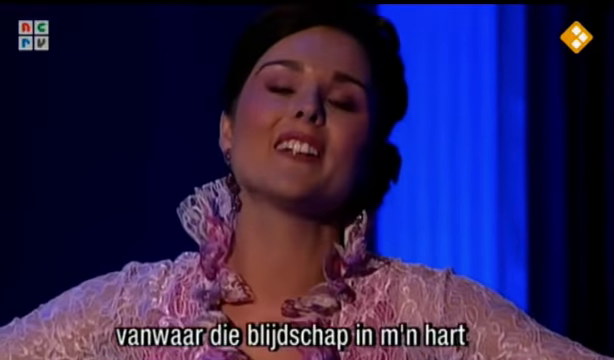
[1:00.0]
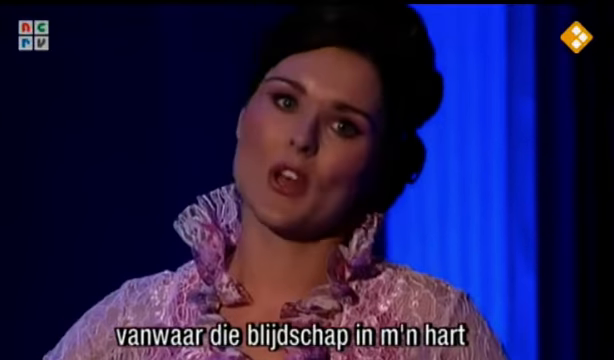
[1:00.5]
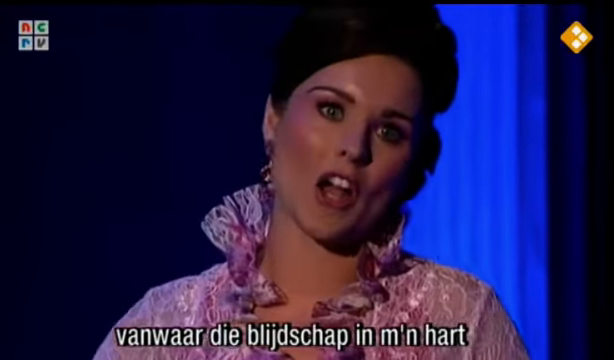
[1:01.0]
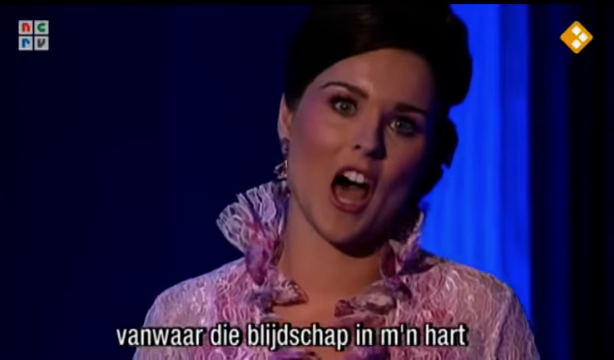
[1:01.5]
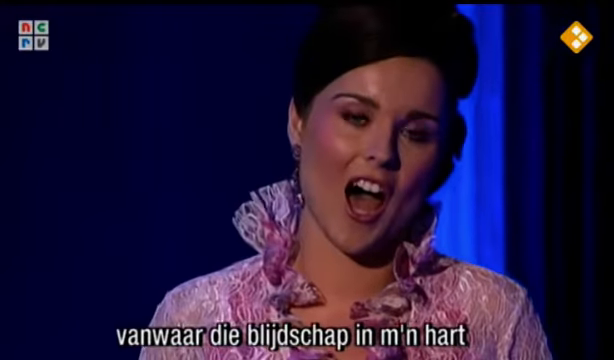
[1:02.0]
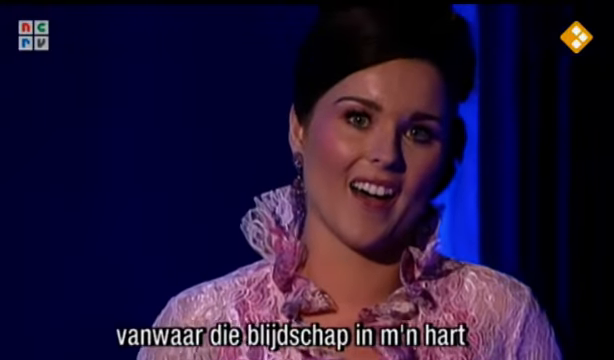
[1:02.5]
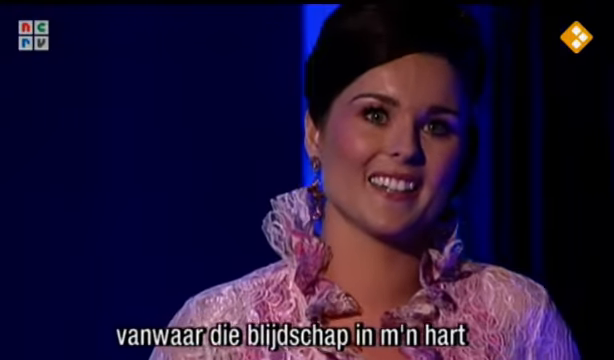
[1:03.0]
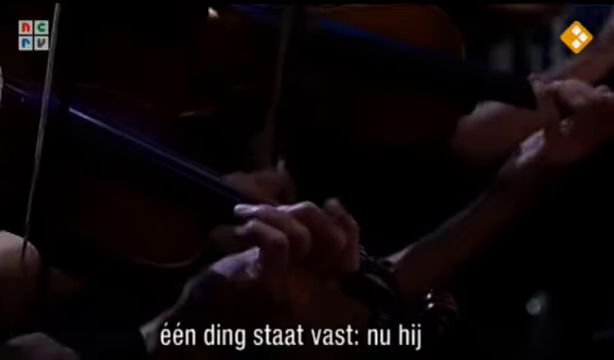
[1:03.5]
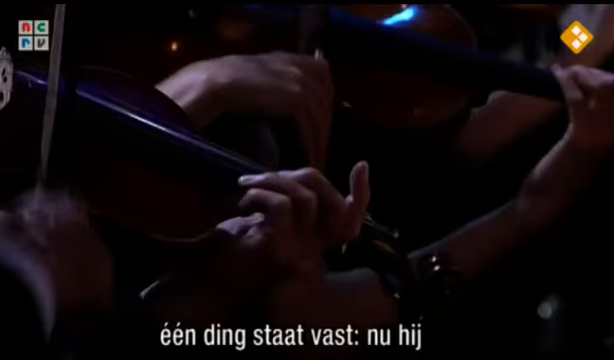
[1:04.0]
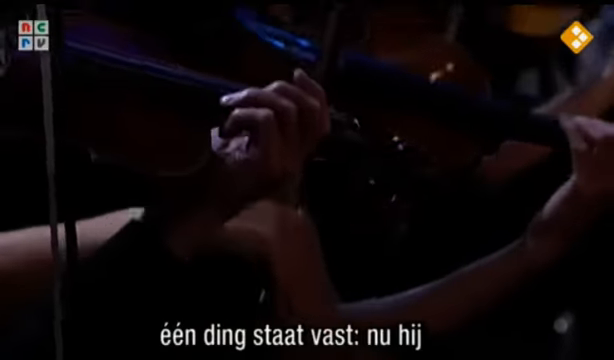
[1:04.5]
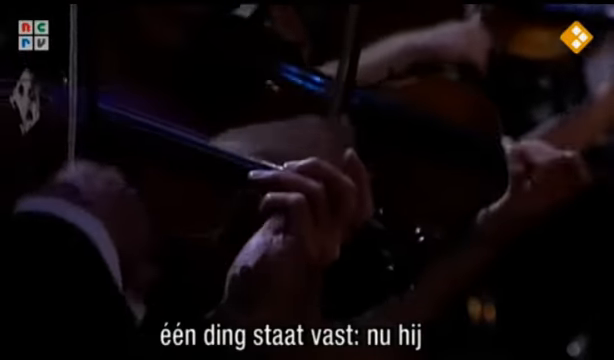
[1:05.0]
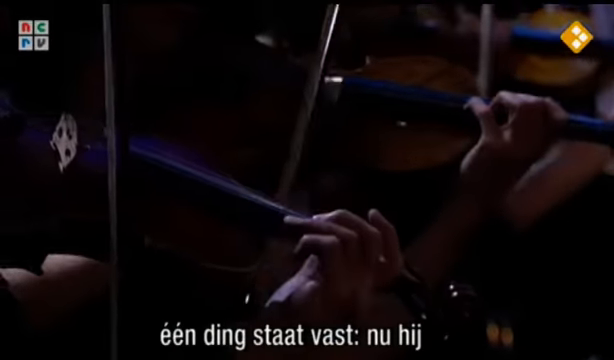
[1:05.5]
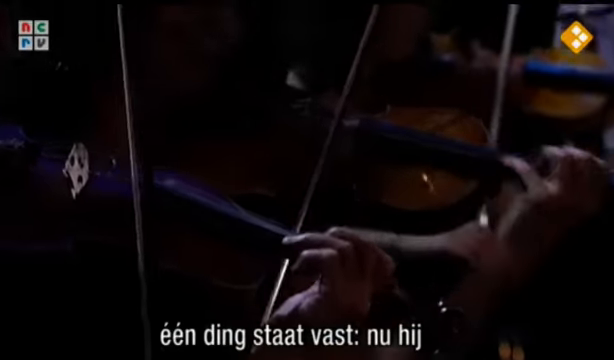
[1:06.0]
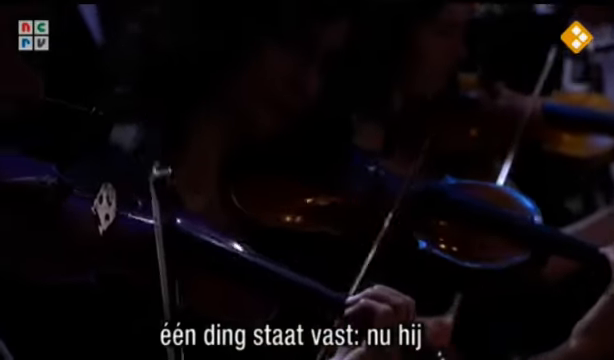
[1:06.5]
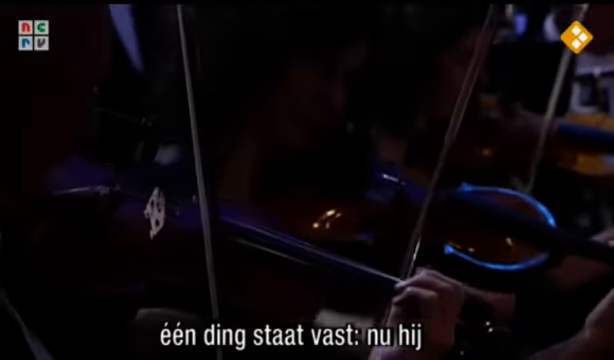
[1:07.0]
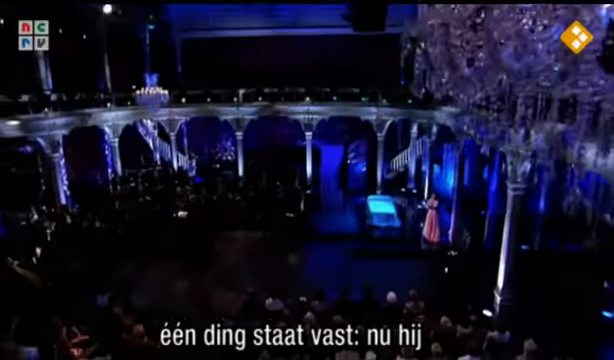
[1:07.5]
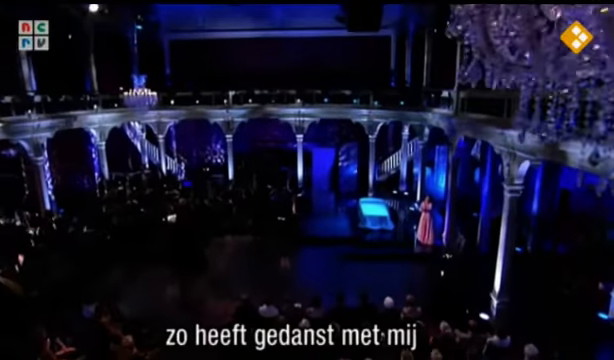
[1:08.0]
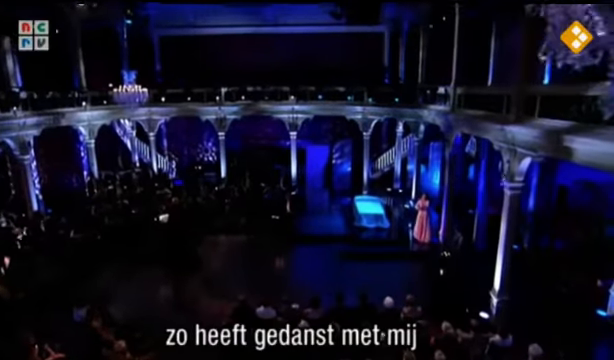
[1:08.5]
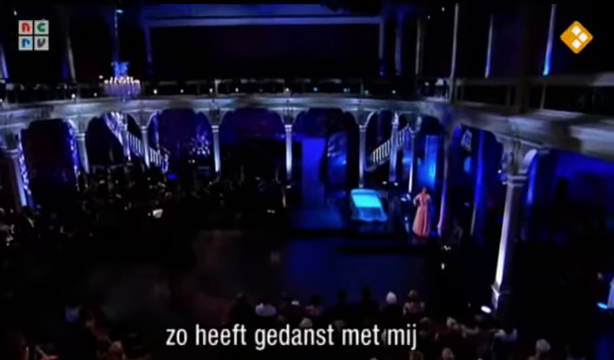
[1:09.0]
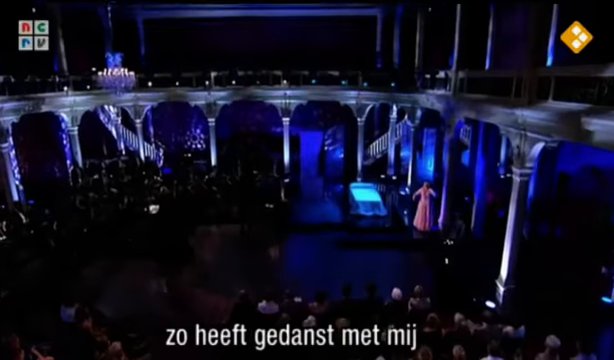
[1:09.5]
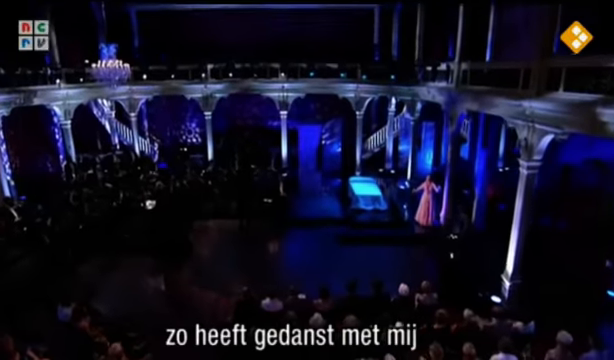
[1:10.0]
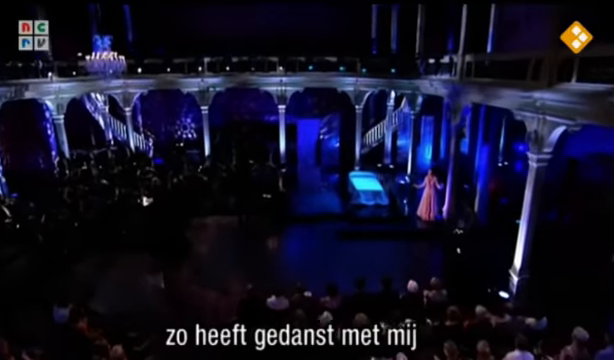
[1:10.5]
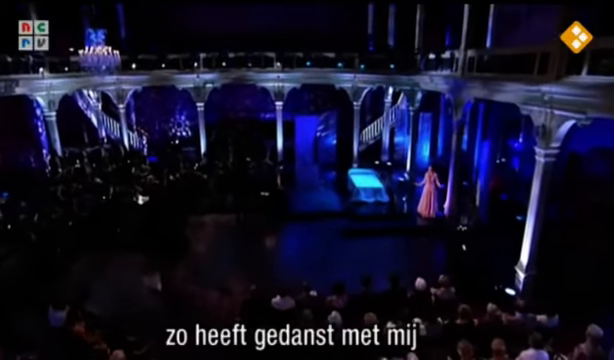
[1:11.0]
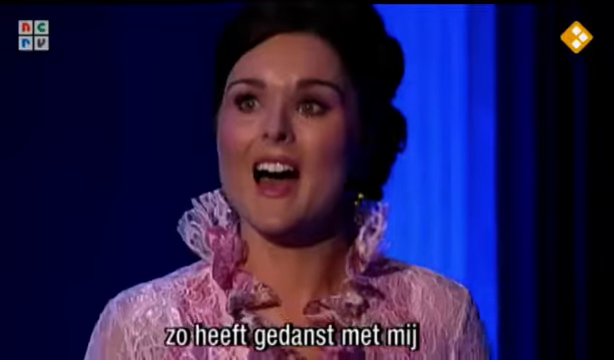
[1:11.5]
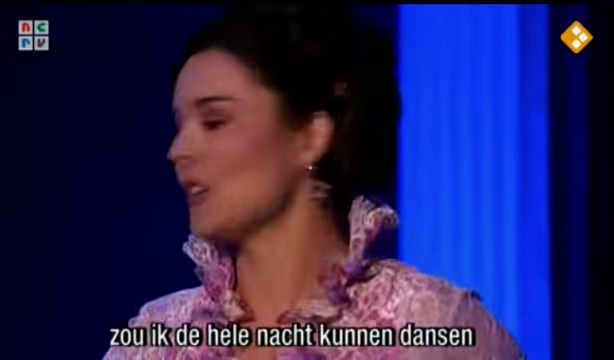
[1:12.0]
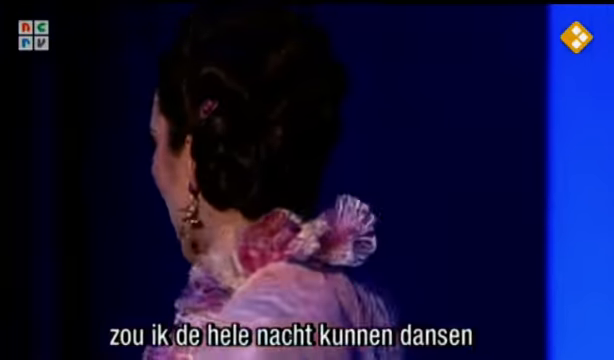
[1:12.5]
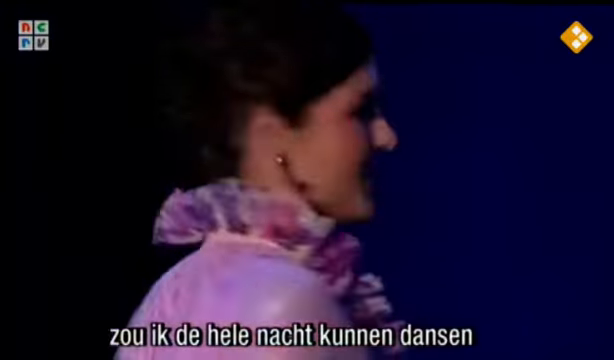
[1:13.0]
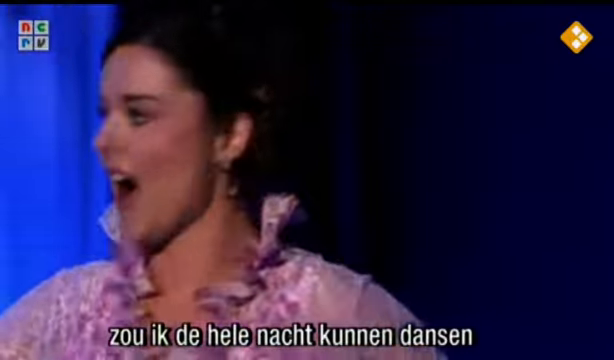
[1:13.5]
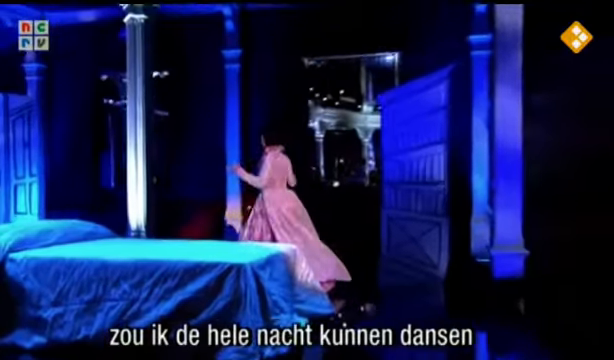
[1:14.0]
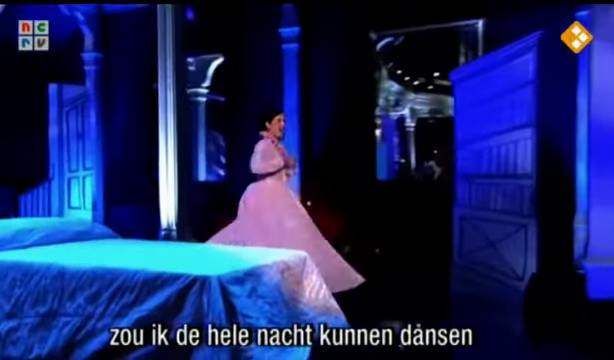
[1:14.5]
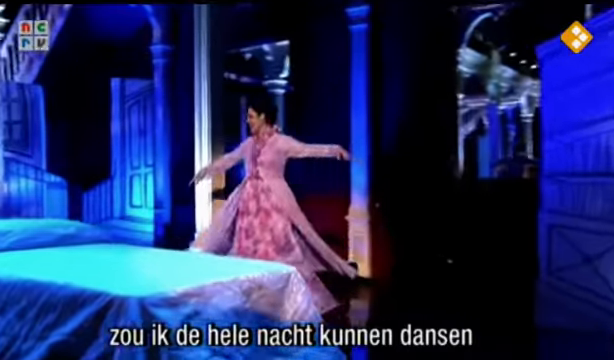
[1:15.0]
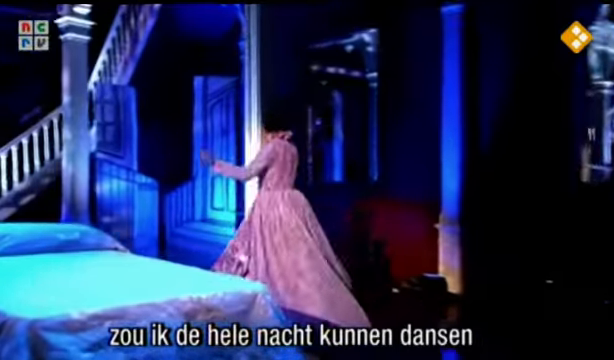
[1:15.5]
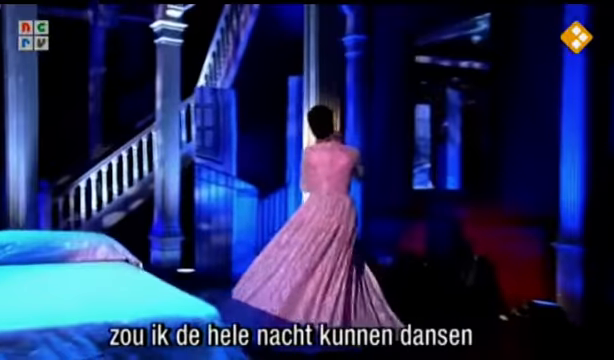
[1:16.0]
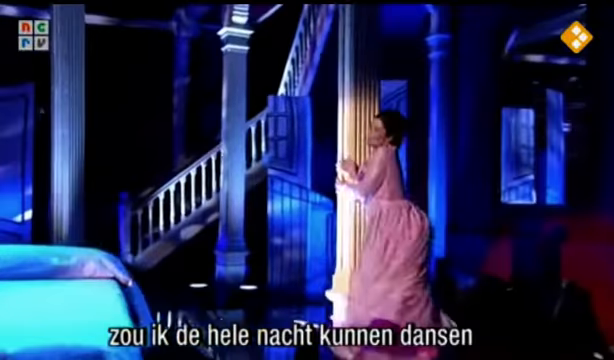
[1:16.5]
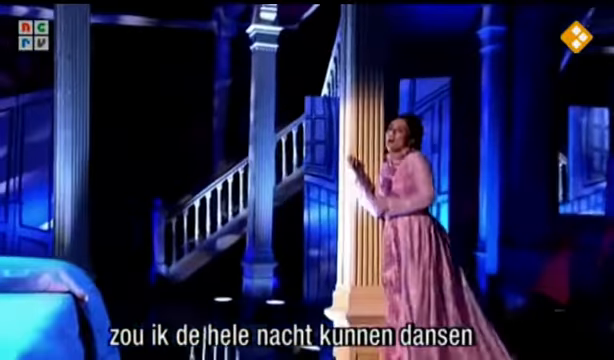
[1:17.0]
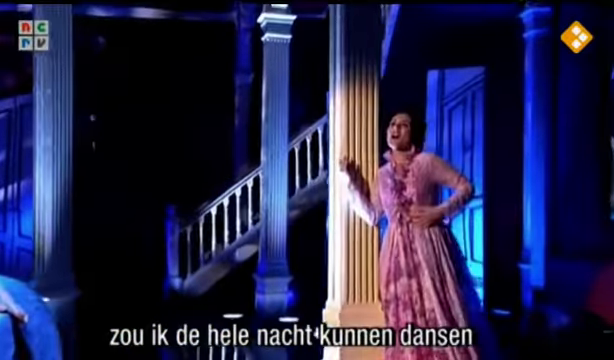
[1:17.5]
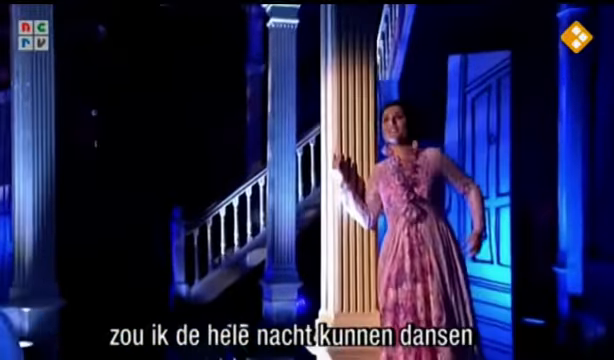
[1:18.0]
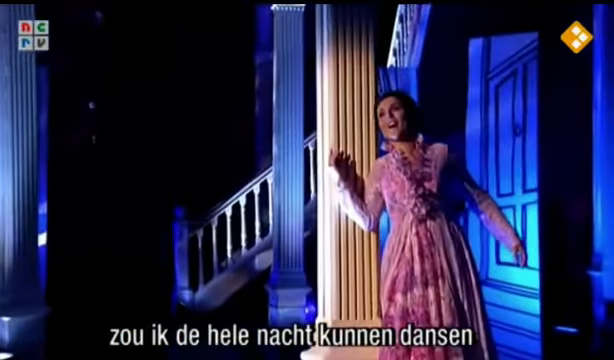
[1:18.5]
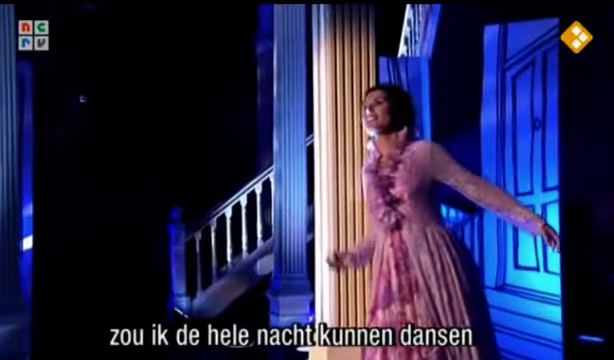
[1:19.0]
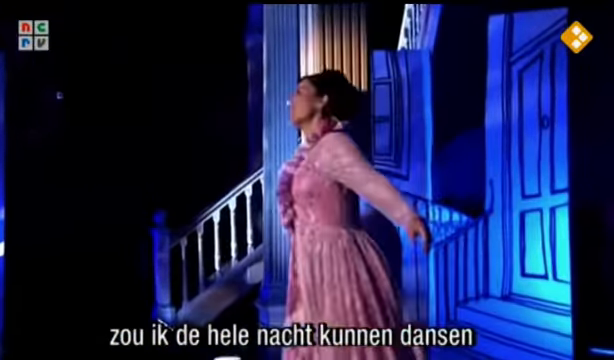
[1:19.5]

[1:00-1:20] In a close-up, the woman sings very passionately, opening her mouth very wide while still smiling and showing her bright white teeth. A shot of the orchestra shows a few violinists playing violins, followed by an aerial view of the whole auditorium, which is full of people and almost completely dark except for the ambient blue, purple and green lights from the stage and the bright pink dress the singer wears. A close-up then shows the singer doing a series of spins and turns as she makes her way across the stage singing. She goes to a pillar, leans her head on it, wraps her arm around it, and starts to slowly go around it, continuing to sing with a very expressive face and elegant movements of her body and arms.